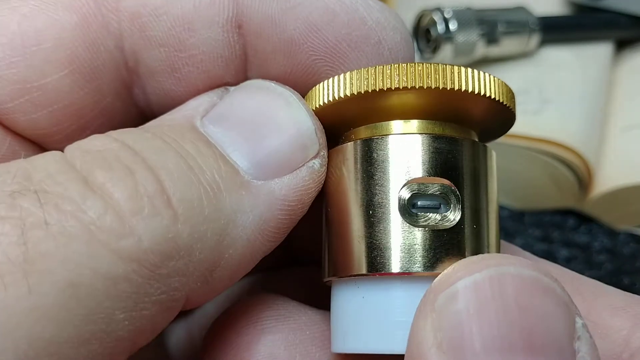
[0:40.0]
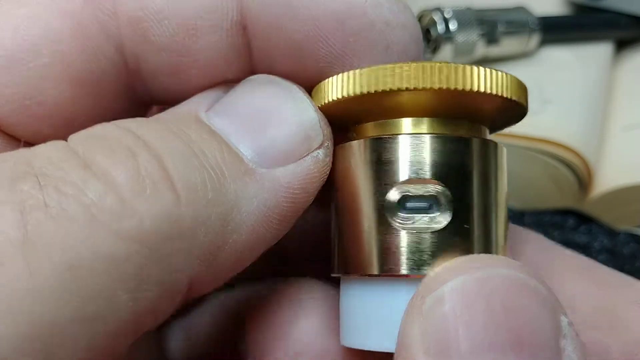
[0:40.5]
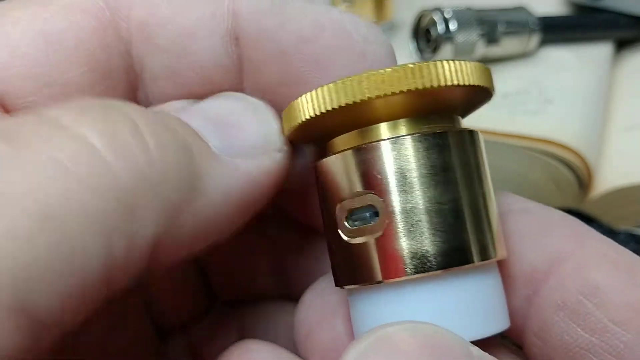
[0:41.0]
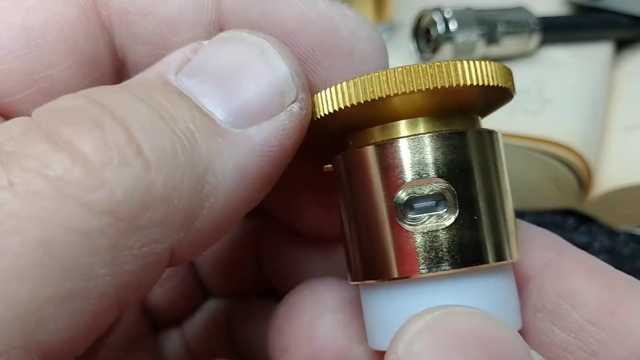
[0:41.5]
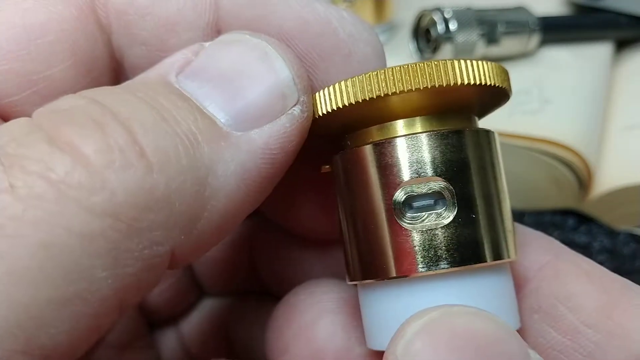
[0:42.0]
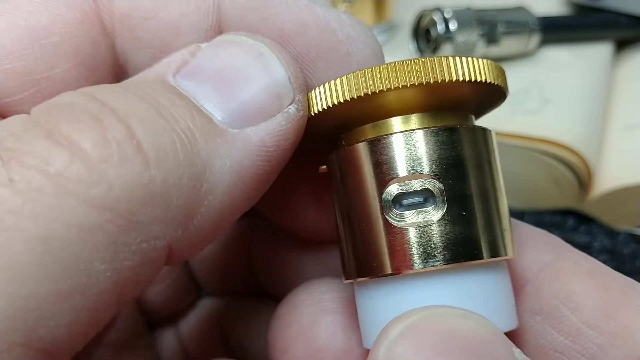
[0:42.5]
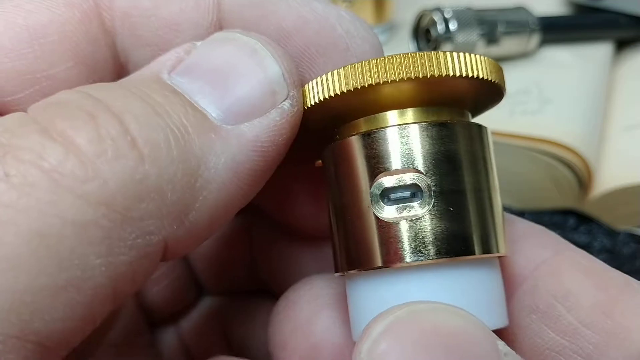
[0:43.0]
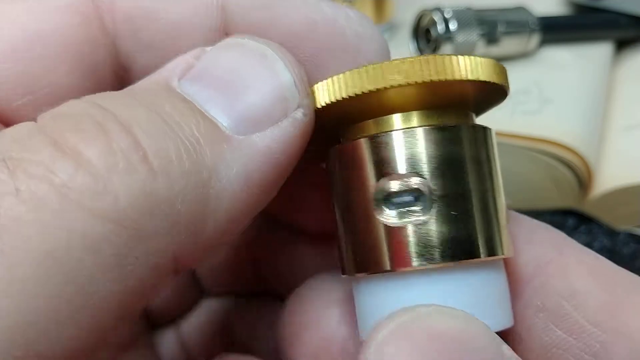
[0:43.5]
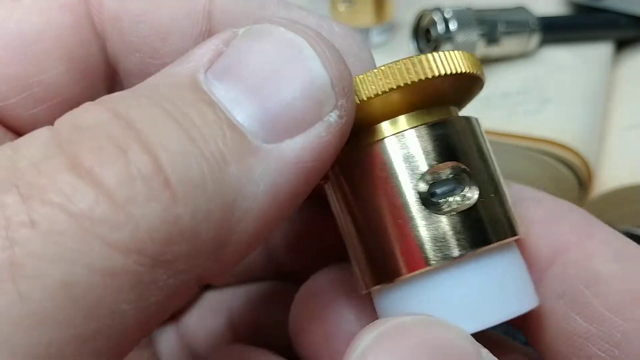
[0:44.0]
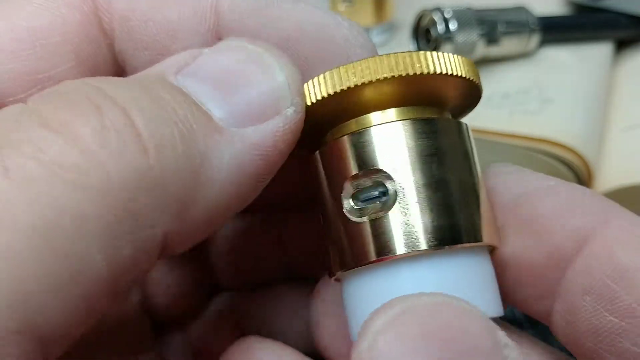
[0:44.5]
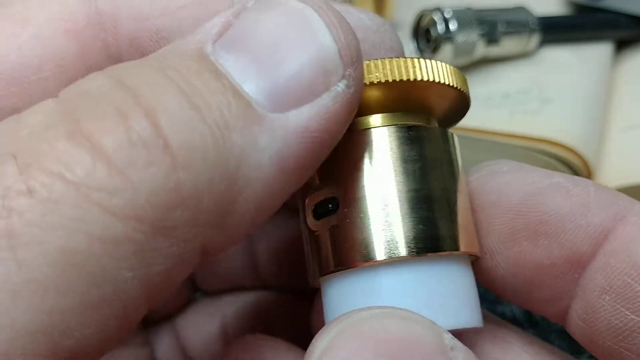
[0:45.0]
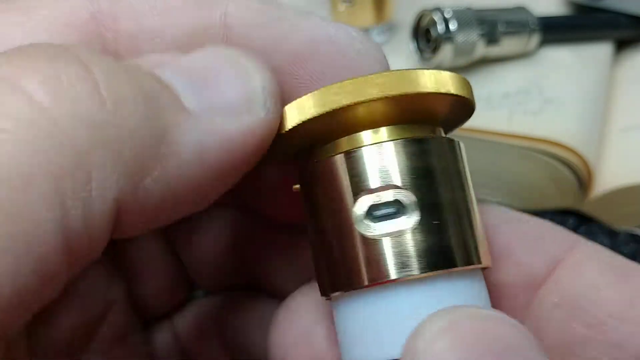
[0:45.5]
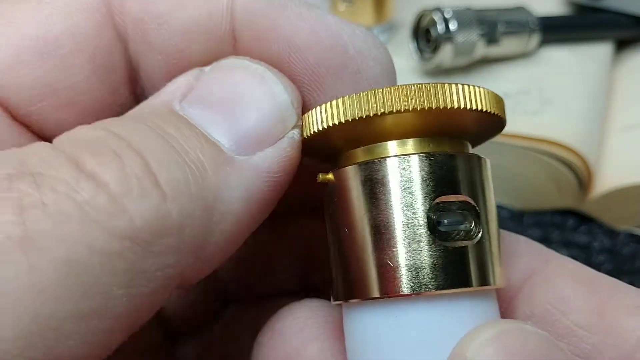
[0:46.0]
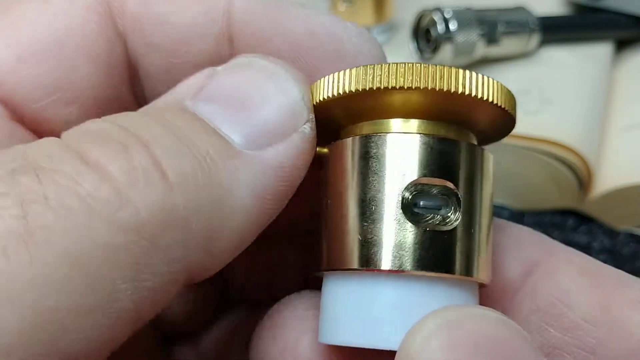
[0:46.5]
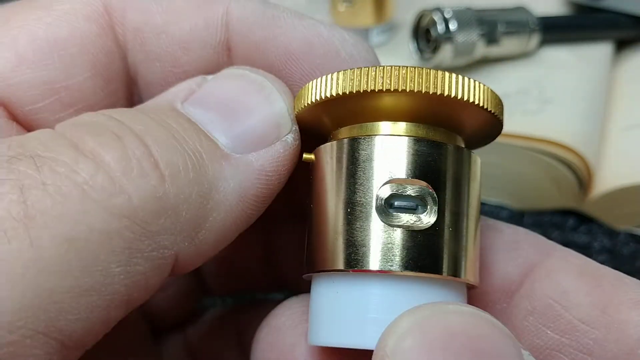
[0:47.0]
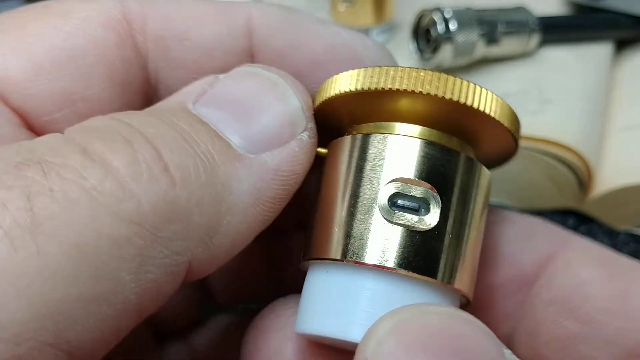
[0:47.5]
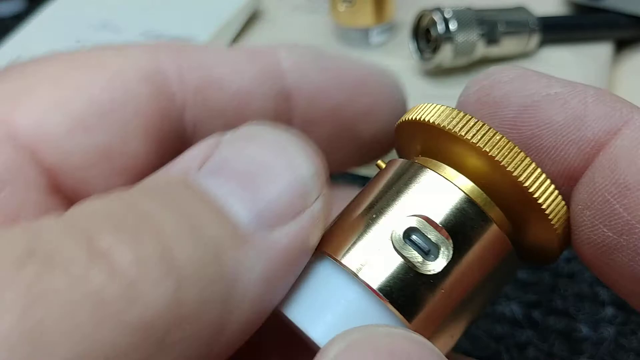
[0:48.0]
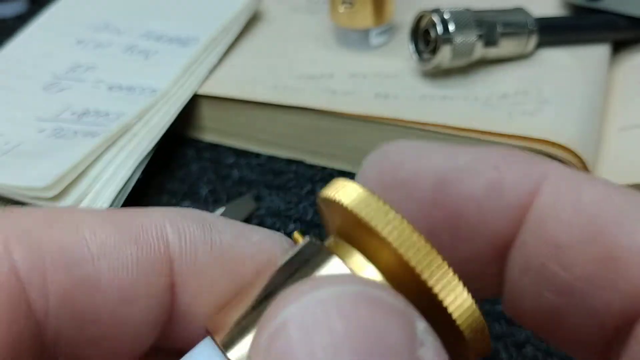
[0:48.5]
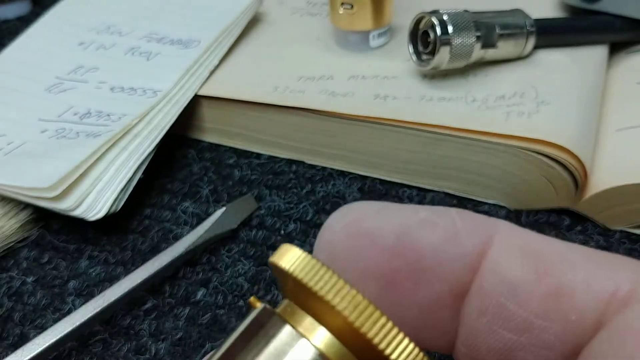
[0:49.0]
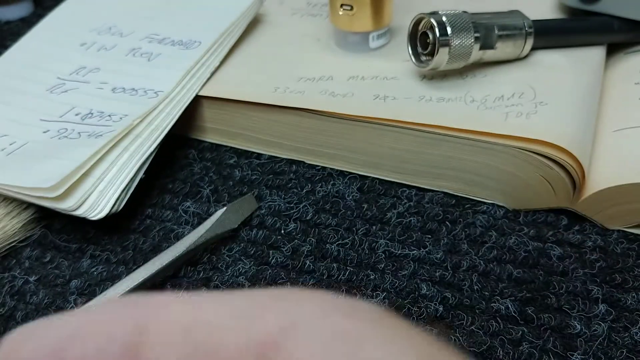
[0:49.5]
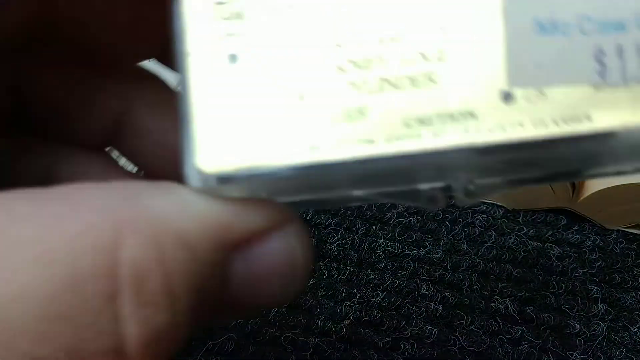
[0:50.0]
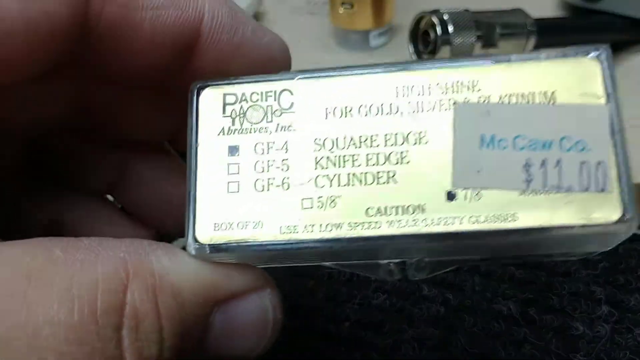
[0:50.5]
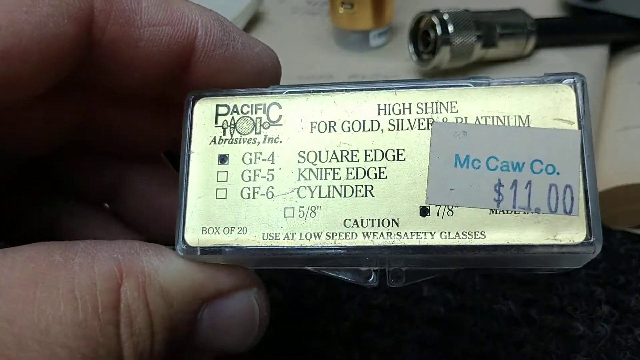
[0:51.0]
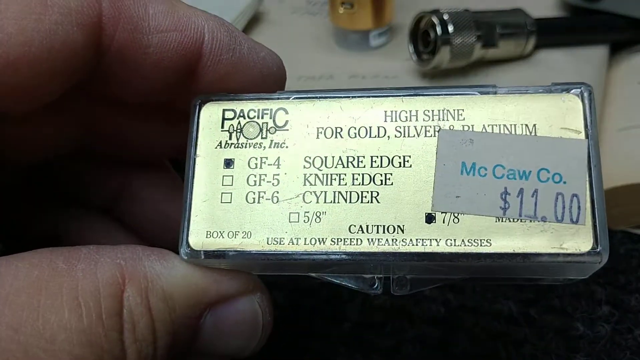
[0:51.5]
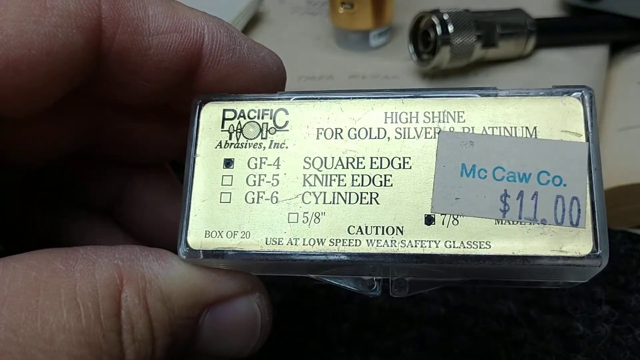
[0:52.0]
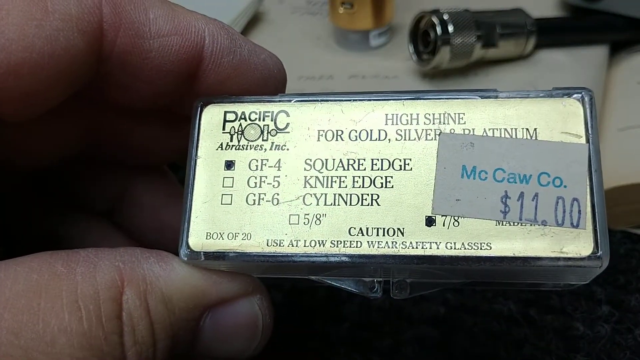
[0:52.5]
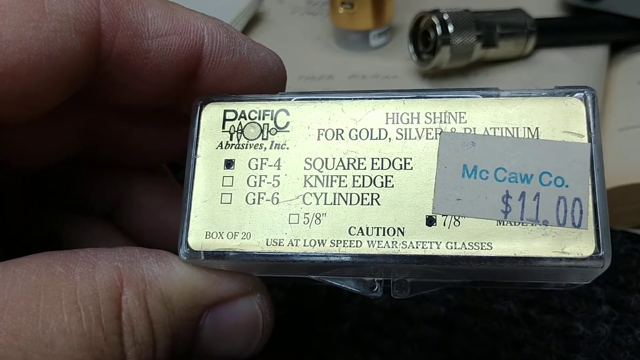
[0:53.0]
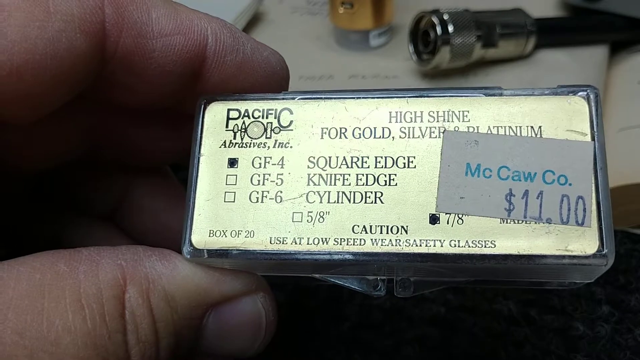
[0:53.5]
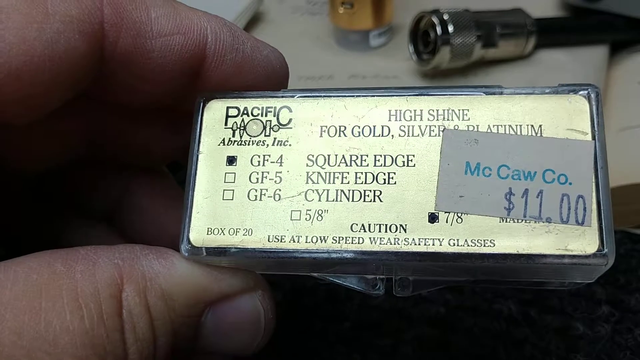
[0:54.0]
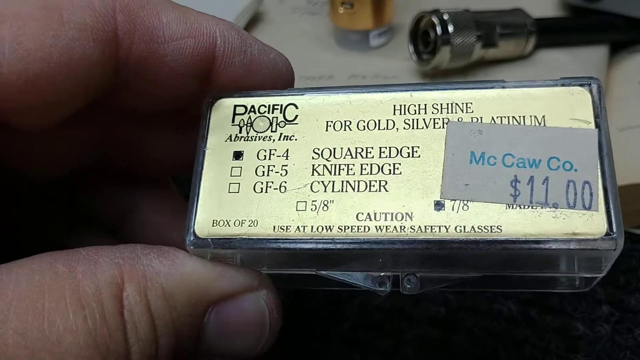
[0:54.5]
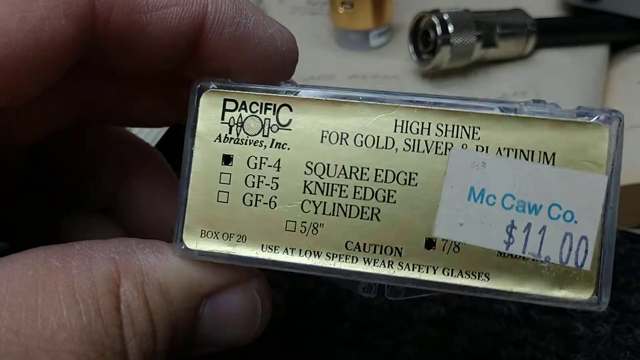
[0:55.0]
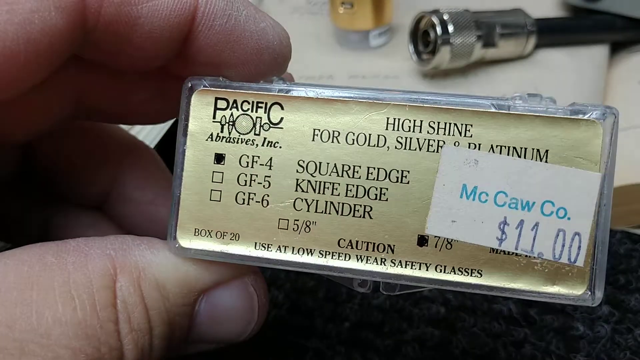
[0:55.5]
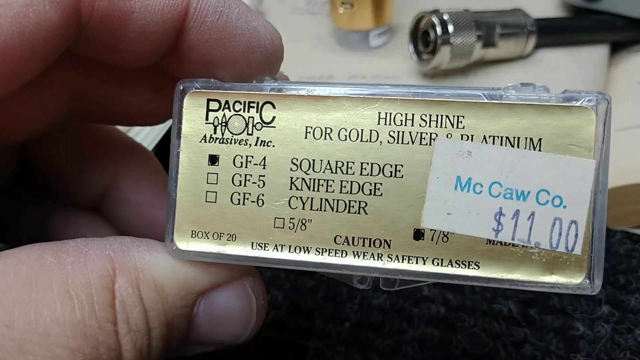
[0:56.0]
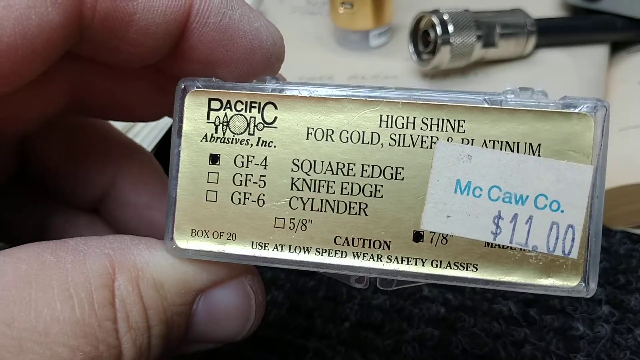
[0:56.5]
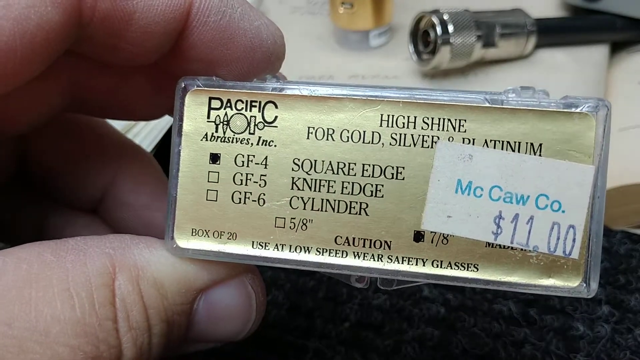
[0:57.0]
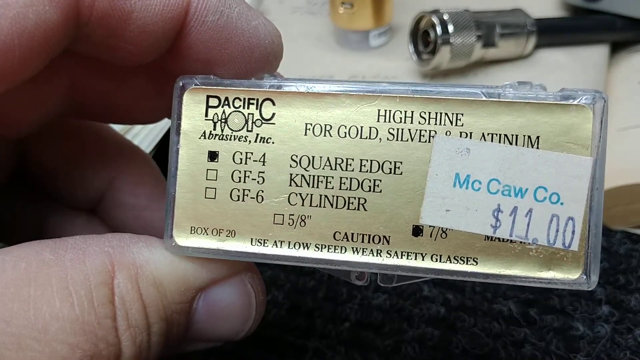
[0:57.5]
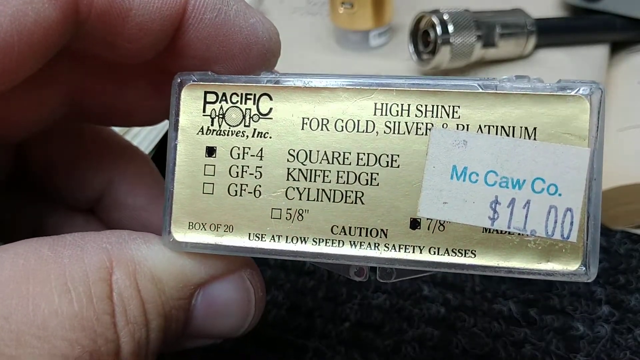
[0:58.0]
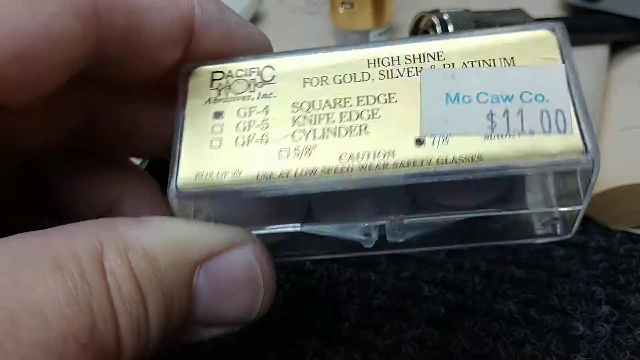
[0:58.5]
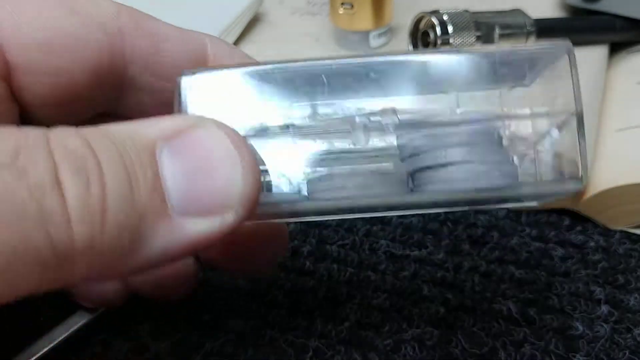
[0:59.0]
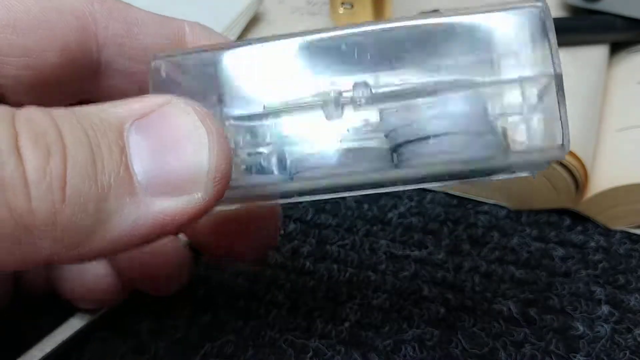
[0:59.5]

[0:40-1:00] A person appears to hold something whose top looks like a gear and is gold, with a plastic container attached underneath. The top is covered in gold metal, and the white plastic sticks out at the bottom. Holding it with both hands, the person rotates it to show different angles of the object. The person then grabs a box with a metal top that looks engraved; on the top of the box it says "specific", and there is a price tag reading "eleven dollars" with blue text above it reading "mccaw co". They seem to angle the box, giving a better view of the text on it, which reads "high shine for gold silver and platinum".